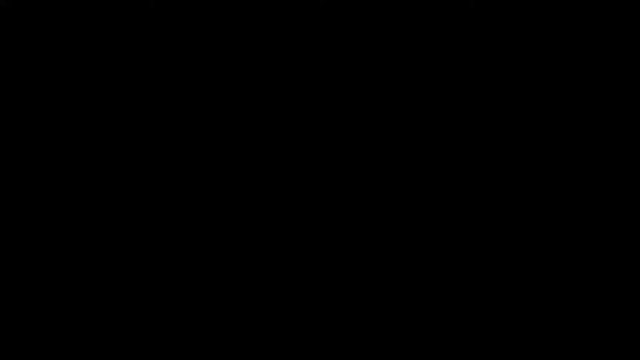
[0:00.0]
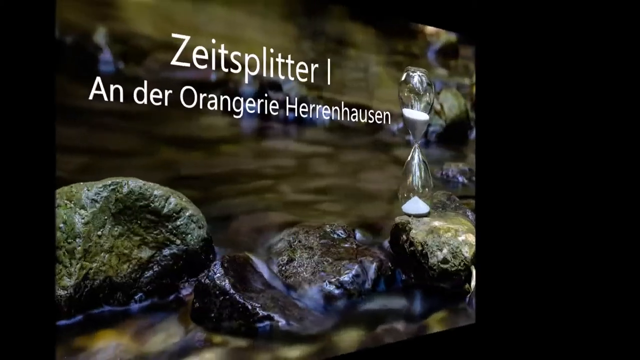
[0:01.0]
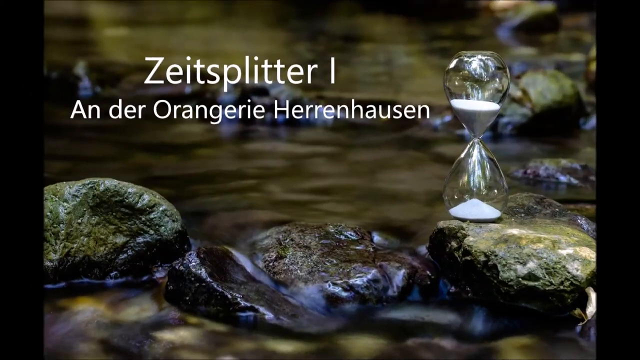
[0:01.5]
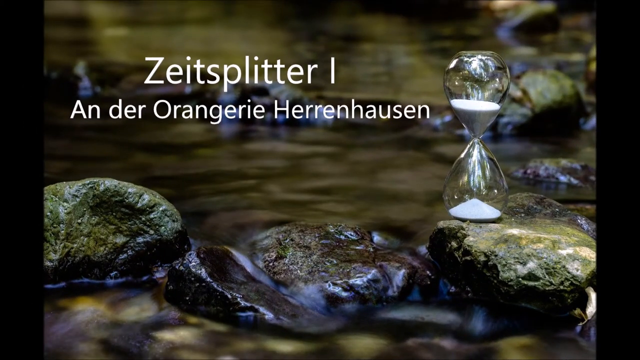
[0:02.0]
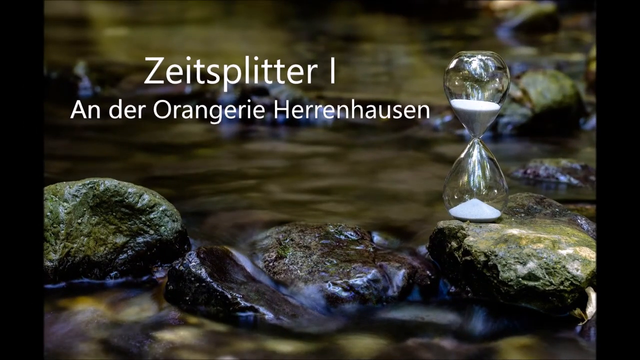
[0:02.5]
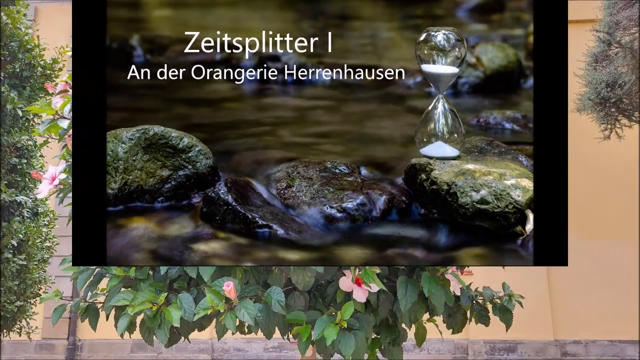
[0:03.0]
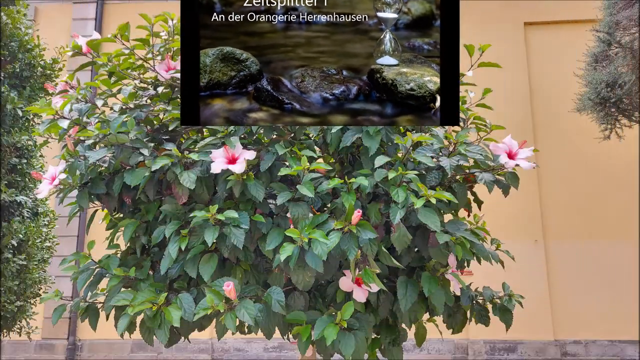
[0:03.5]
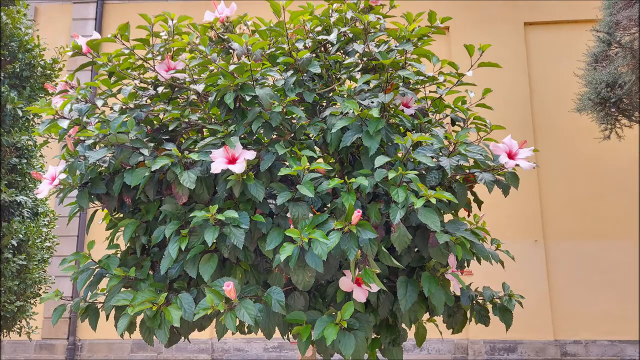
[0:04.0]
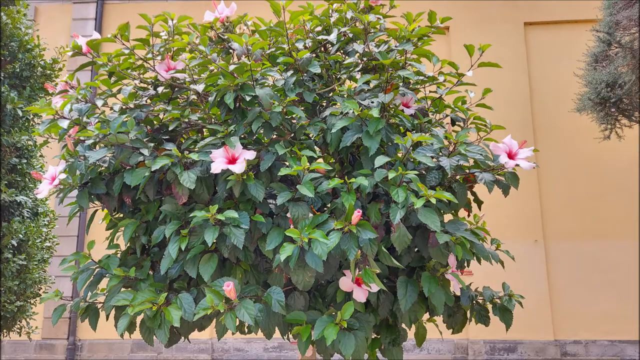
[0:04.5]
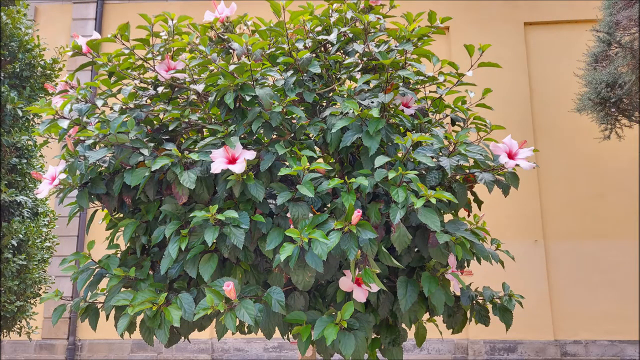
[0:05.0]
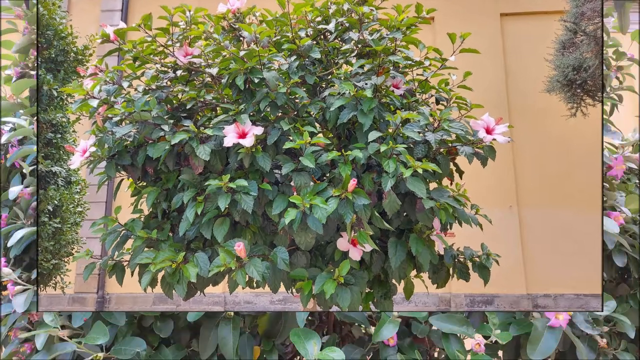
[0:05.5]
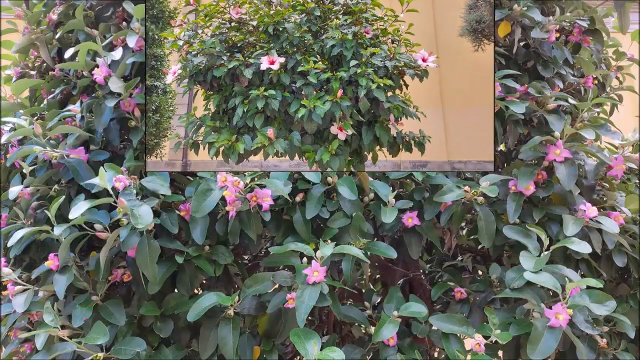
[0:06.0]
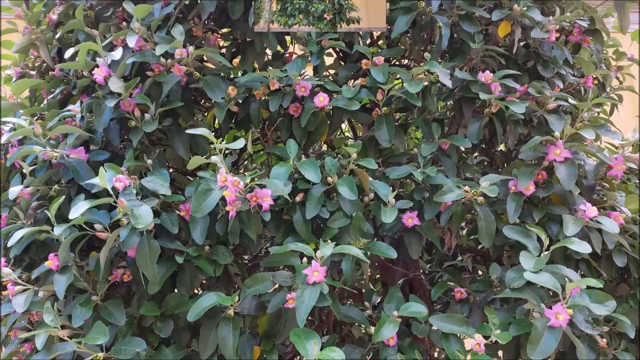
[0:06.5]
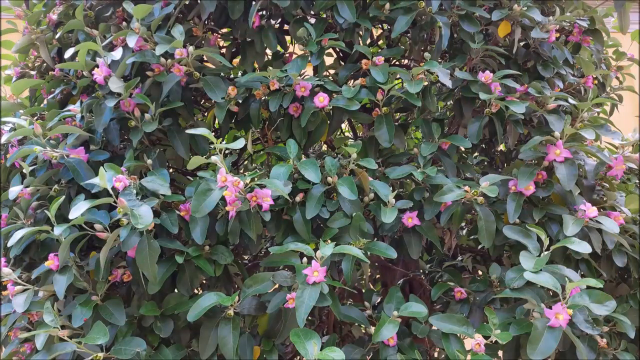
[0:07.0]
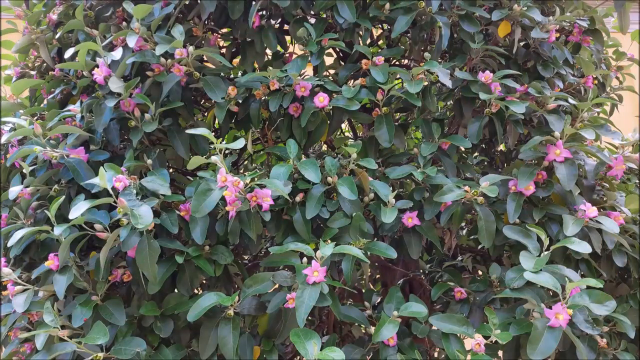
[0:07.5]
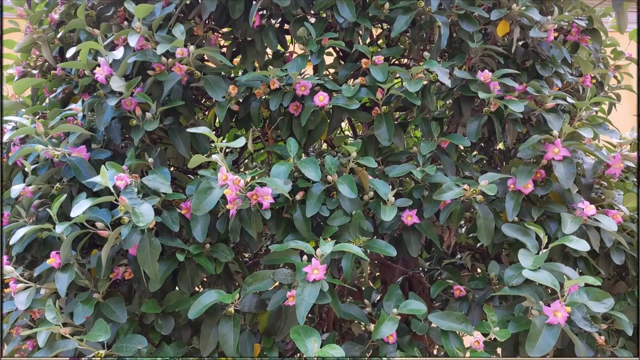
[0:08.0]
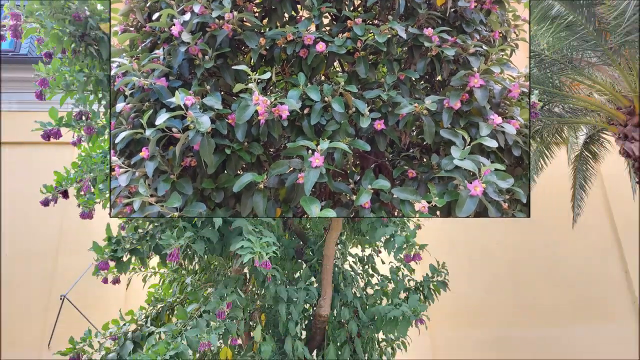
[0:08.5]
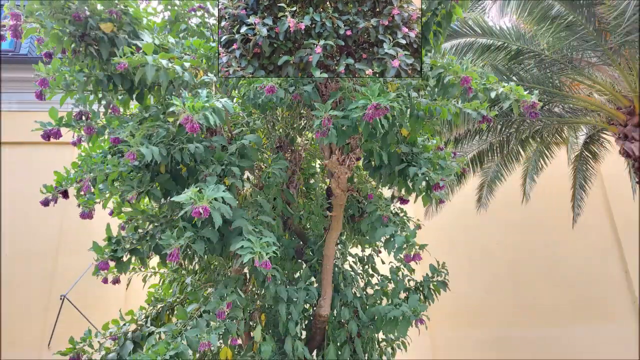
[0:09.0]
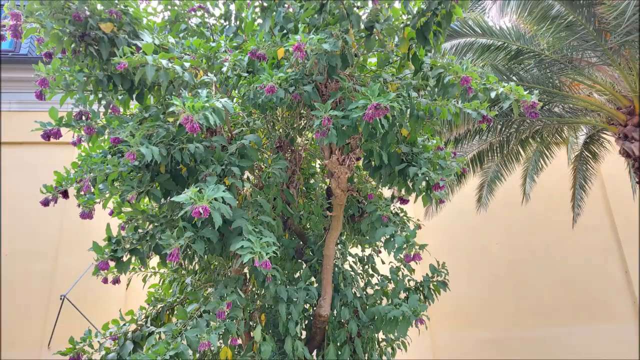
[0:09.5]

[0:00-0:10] The video opens with German text over an hourglass on top of a stone, with several stones in a stream. It then moves to a bush with pink flowers that look tropical.